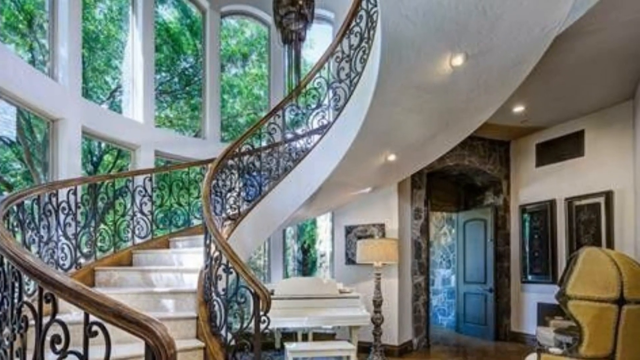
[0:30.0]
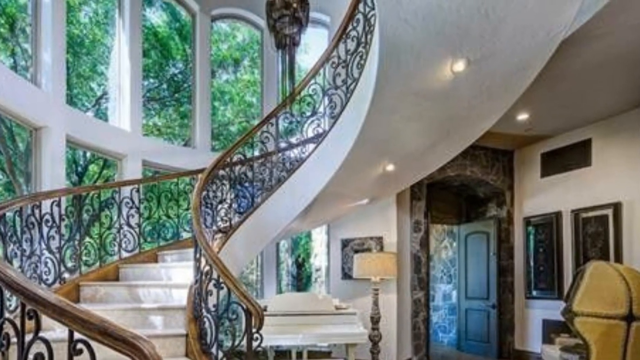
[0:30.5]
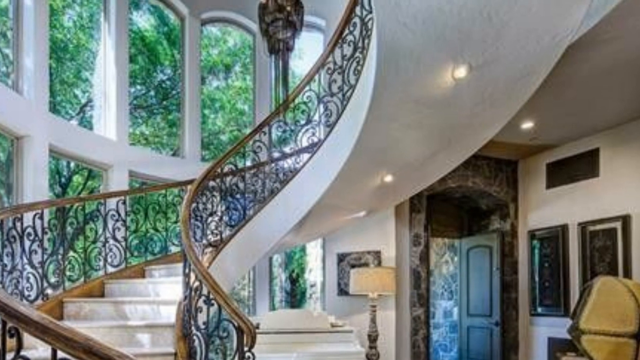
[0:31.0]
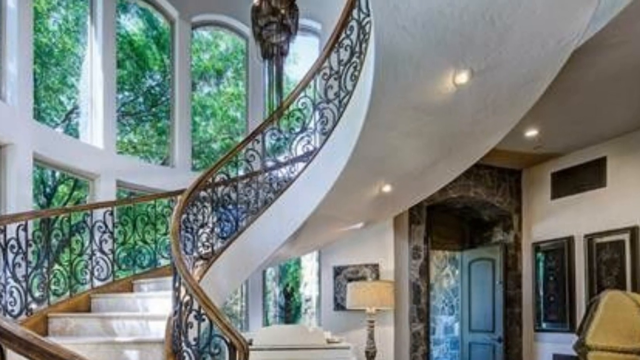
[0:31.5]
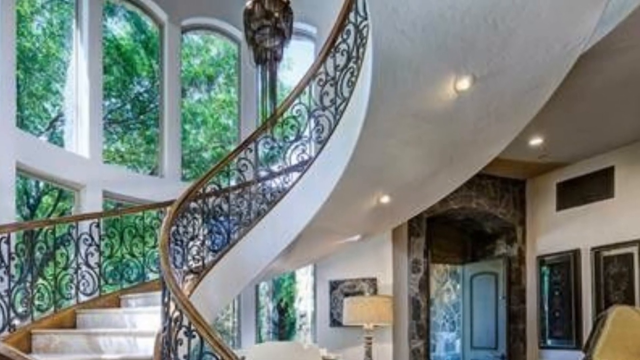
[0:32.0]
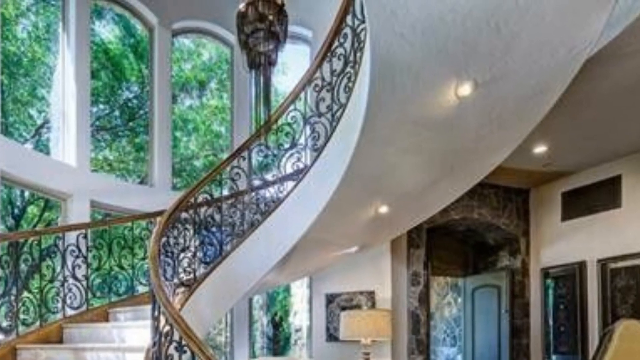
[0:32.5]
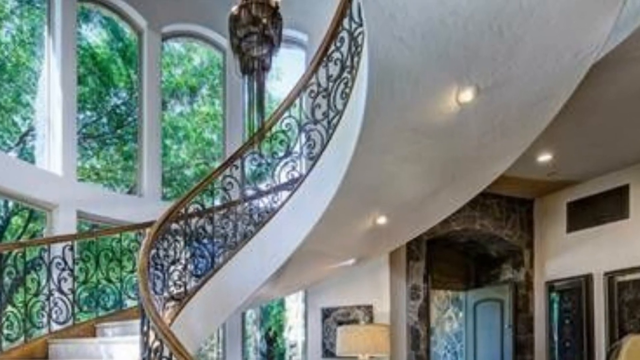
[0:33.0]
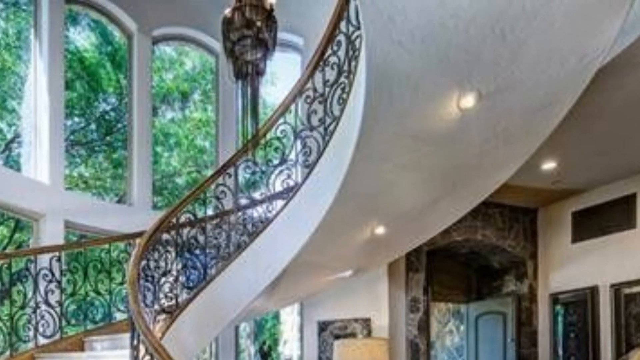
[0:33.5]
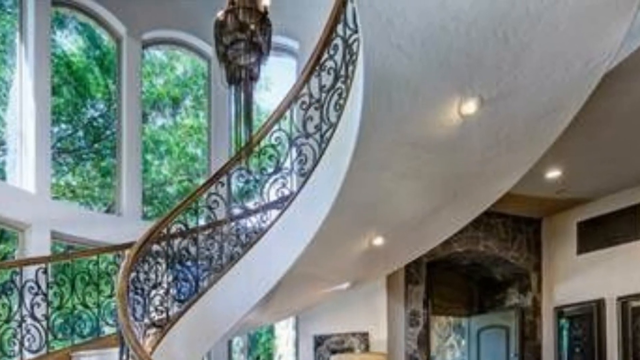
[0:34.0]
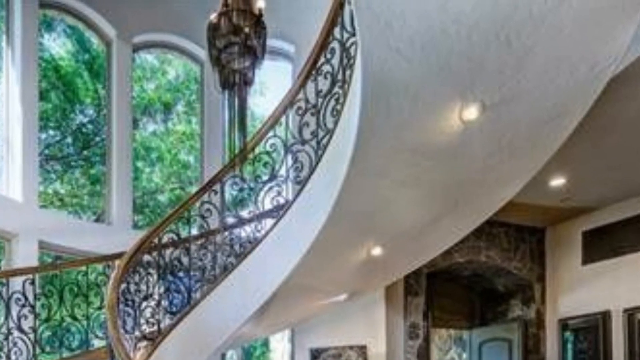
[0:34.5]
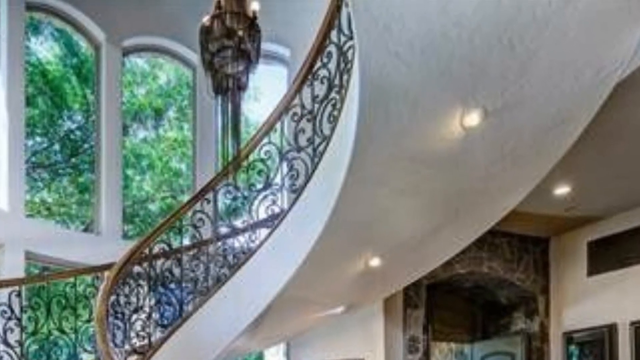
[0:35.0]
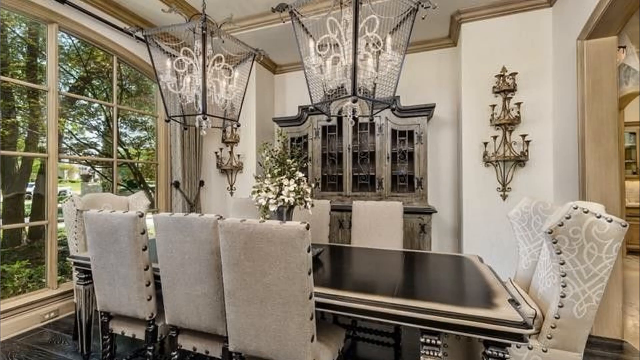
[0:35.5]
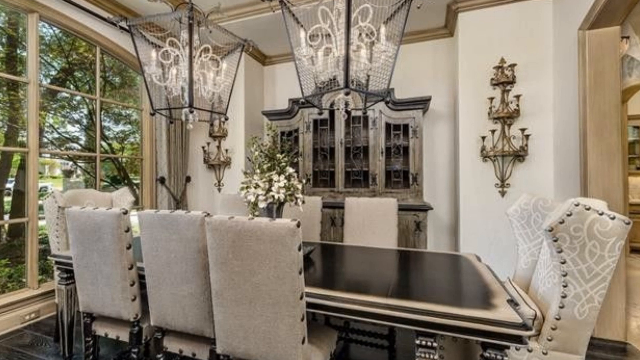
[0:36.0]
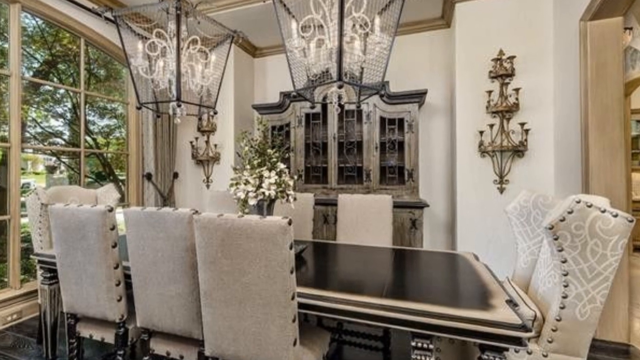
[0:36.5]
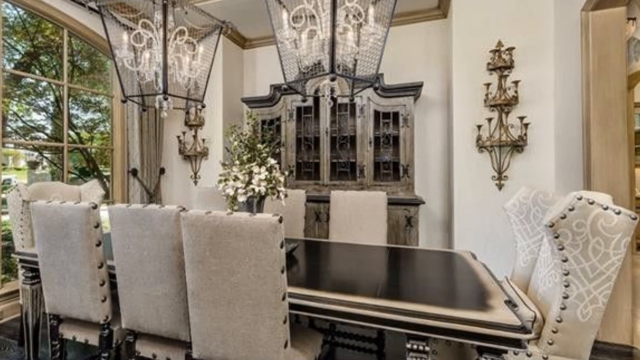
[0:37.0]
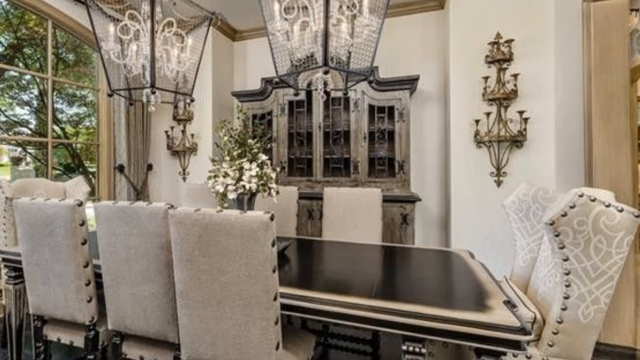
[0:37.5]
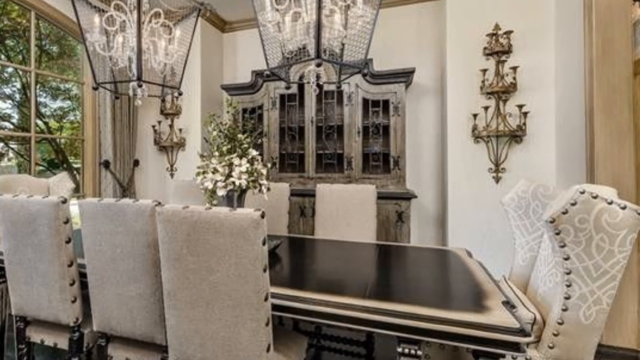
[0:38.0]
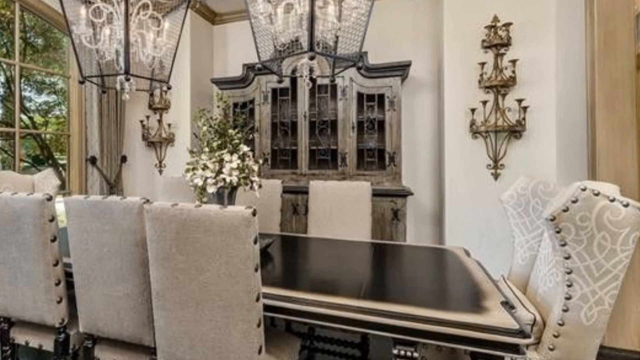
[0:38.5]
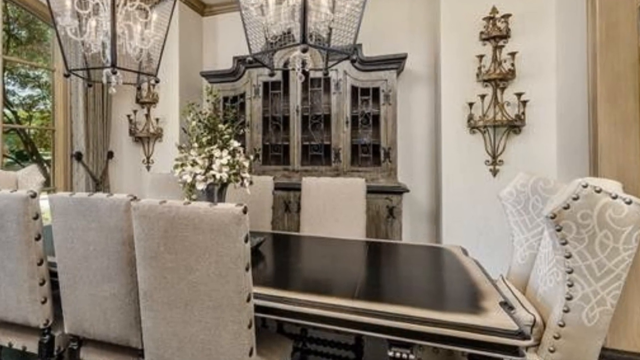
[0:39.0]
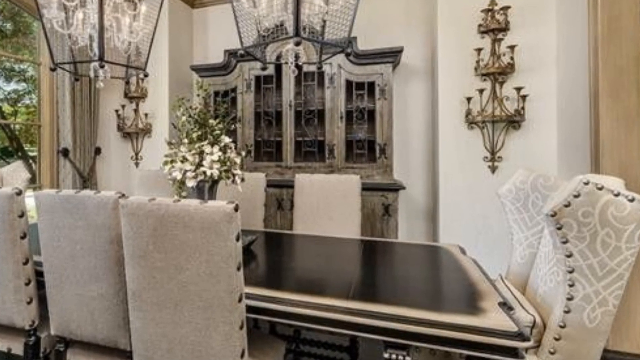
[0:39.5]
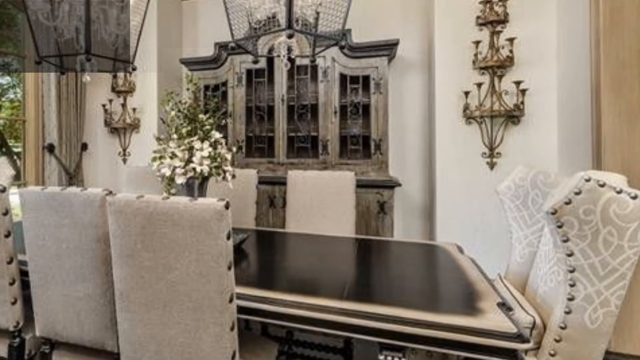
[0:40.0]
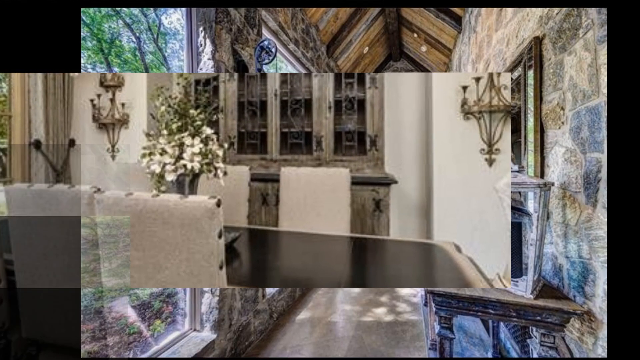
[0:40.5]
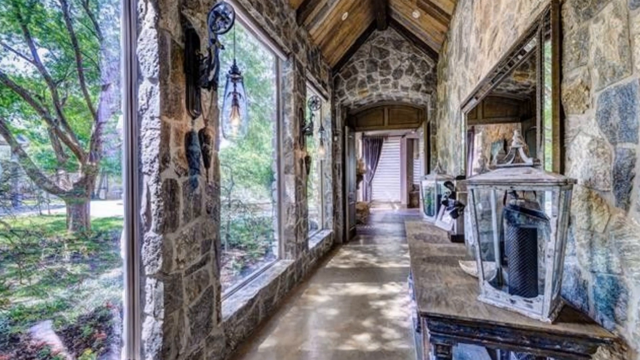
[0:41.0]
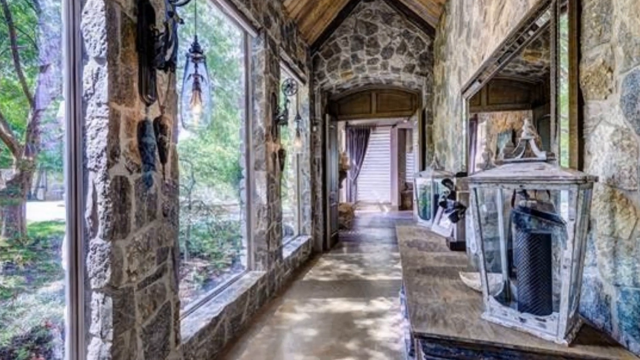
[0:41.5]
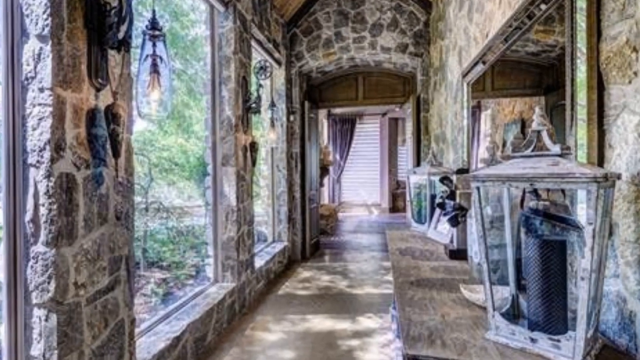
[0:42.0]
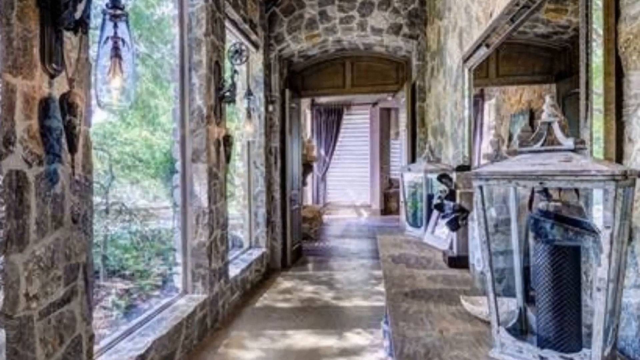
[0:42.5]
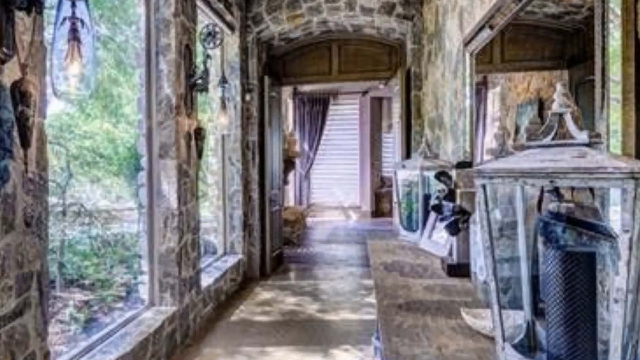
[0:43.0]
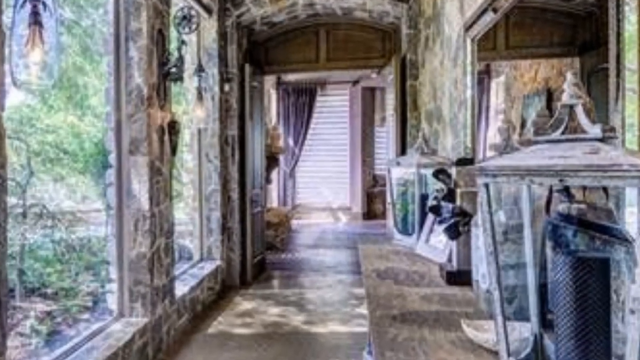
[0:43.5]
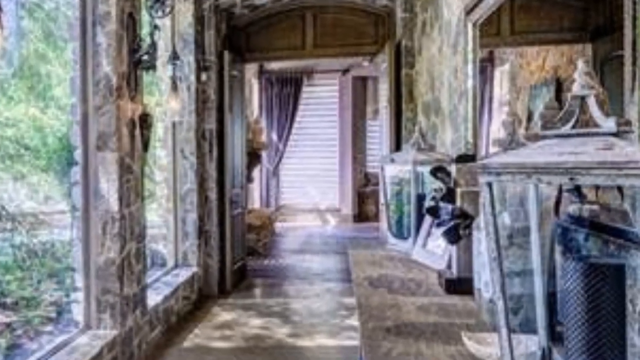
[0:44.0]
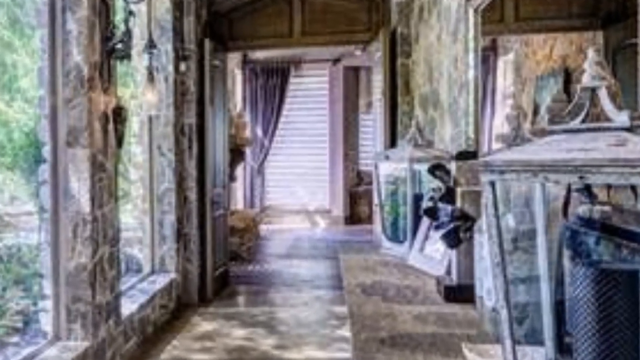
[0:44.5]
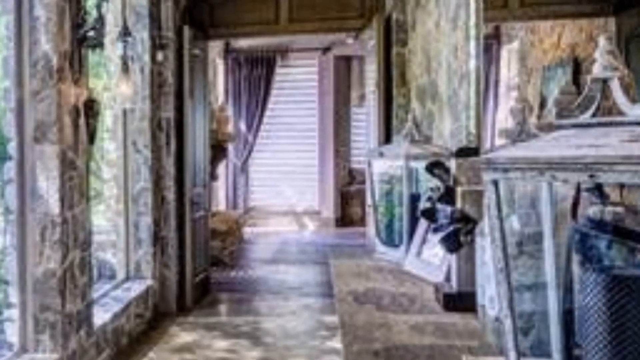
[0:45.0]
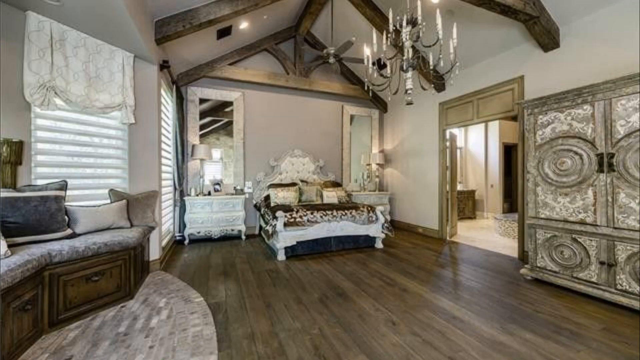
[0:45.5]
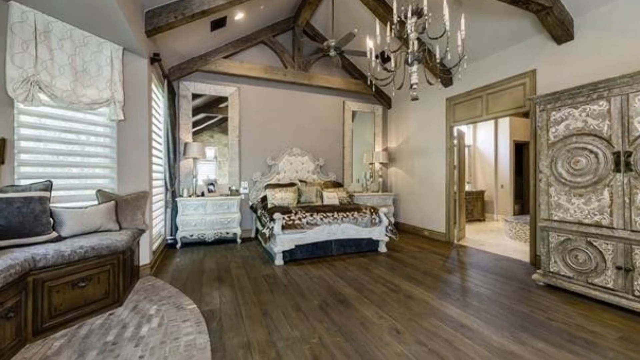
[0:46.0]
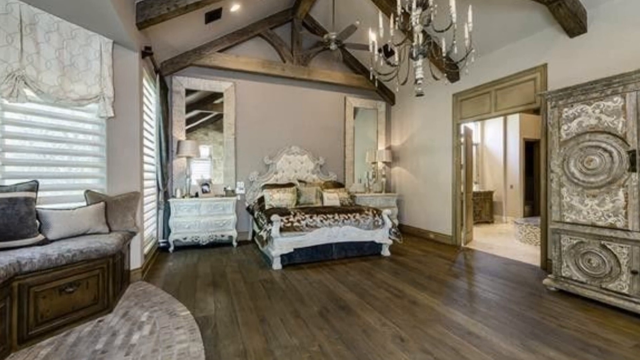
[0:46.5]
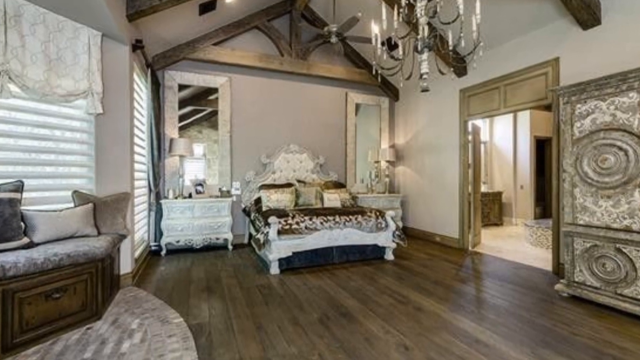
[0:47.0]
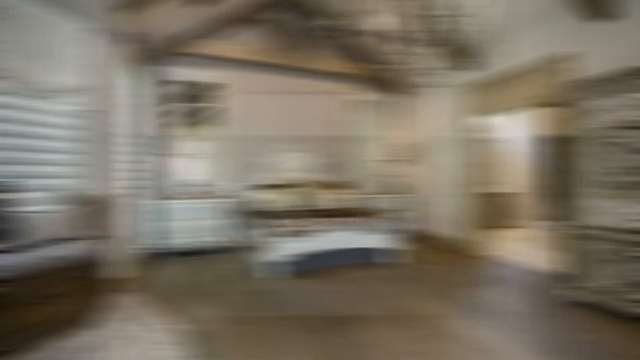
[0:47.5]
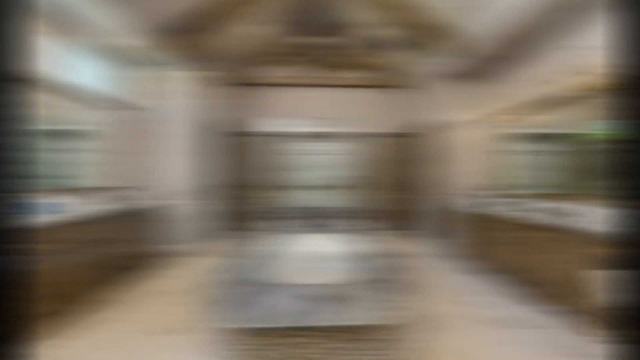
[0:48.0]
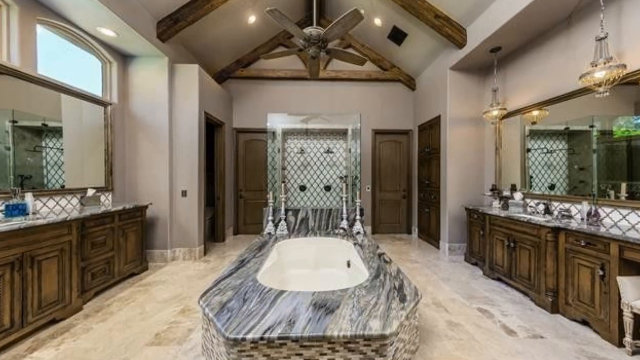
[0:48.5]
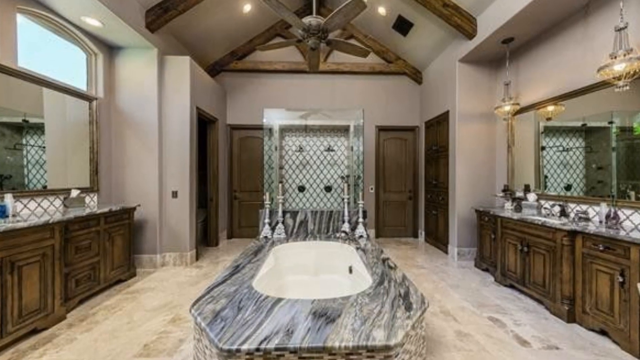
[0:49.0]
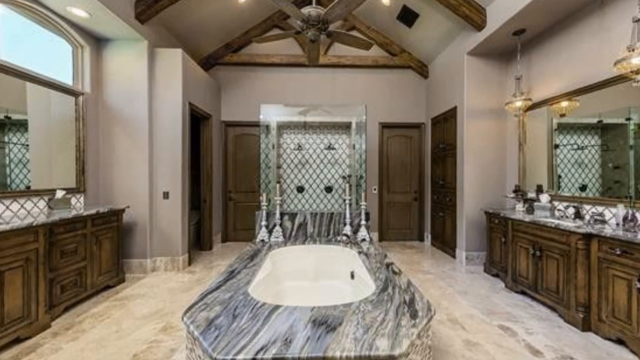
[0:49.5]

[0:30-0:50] The camera first focuses on the winding spiral staircase going upward, with the zoom moving up it and getting very close. The view then moves to another room, probably on the first level, since the outside is visible and it looks low to the ground. The camera zooms into what appears to be a dining room with a black table and white chairs, continuing the beige, white and black color theme, along with light fixtures. Next comes an indoor-outdoor area with very large windows and outdoor-looking brick, a narrowish walkway or hall rather than a room, and the camera zooms in on a few things on a shelving unit. The view then moves to a bedroom, possibly the master bedroom.